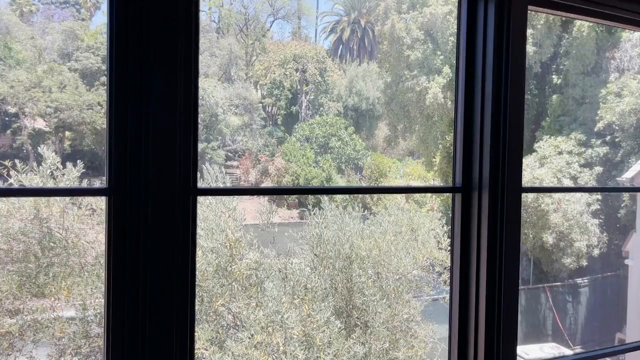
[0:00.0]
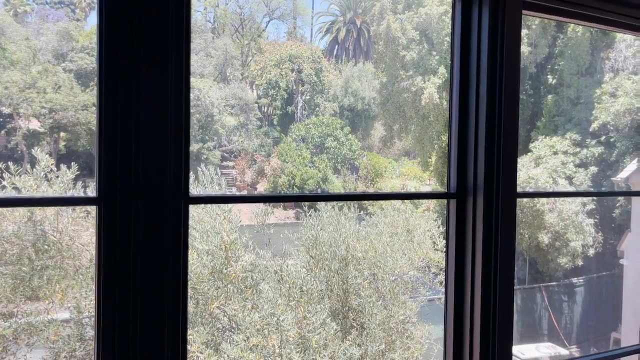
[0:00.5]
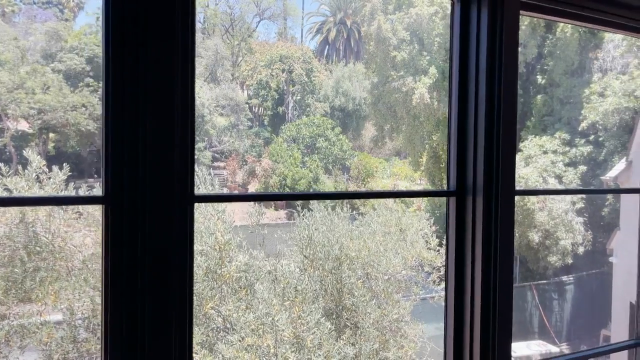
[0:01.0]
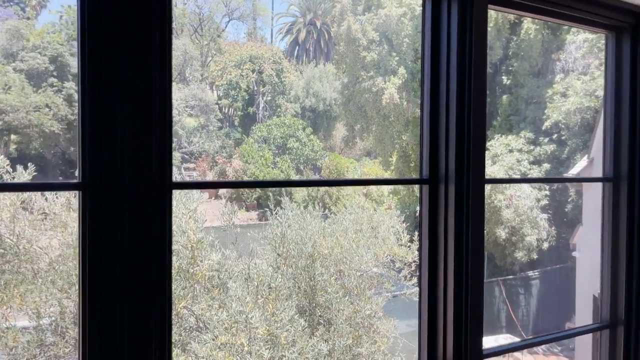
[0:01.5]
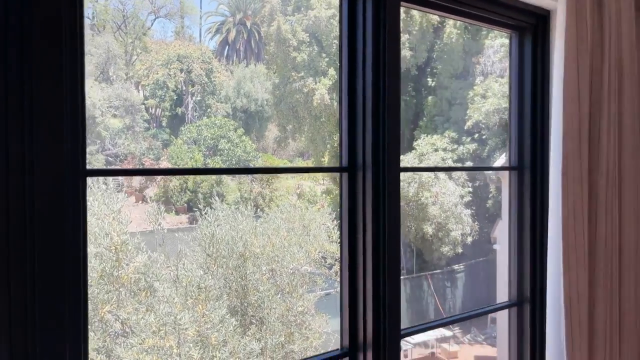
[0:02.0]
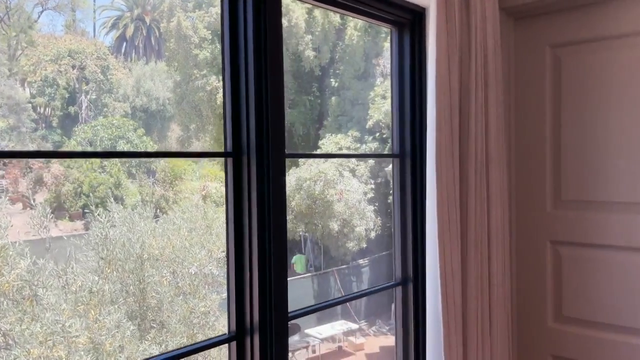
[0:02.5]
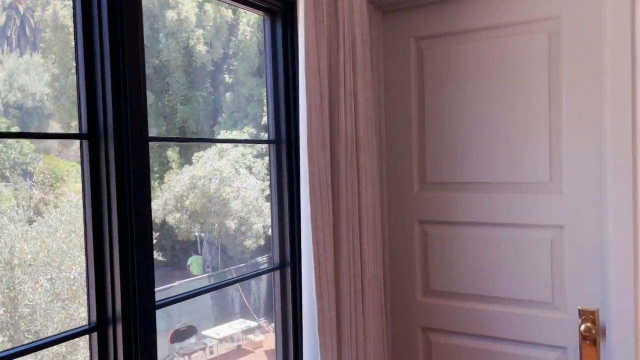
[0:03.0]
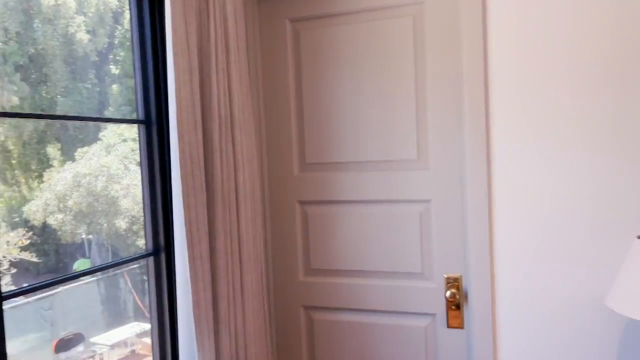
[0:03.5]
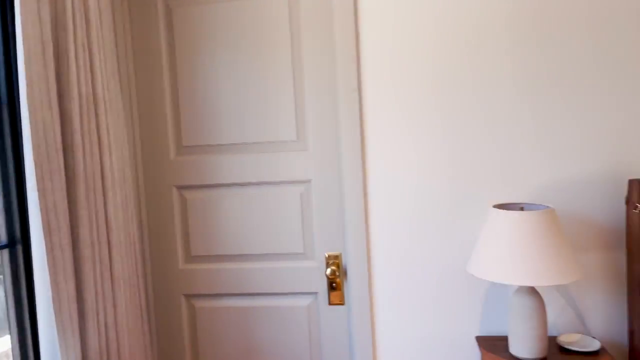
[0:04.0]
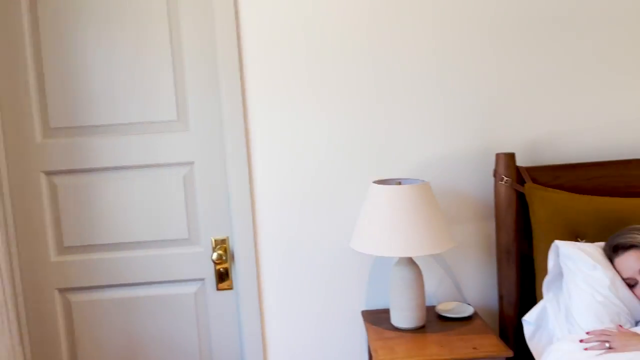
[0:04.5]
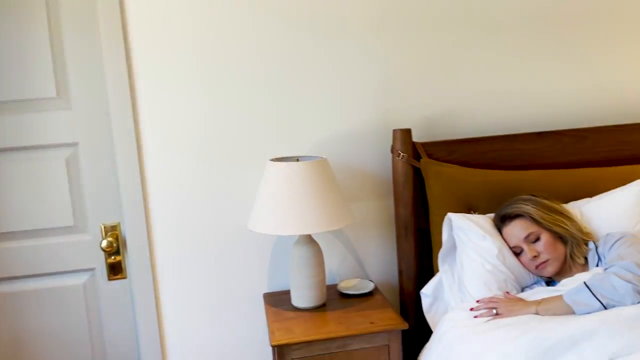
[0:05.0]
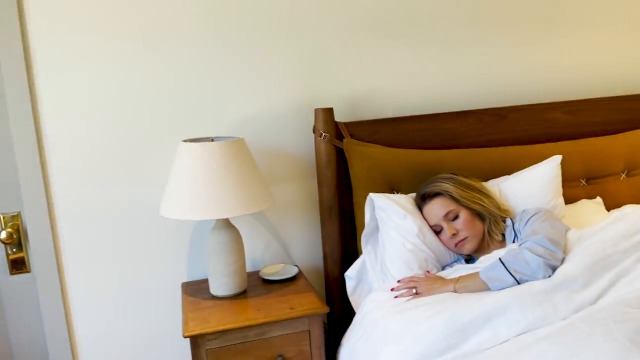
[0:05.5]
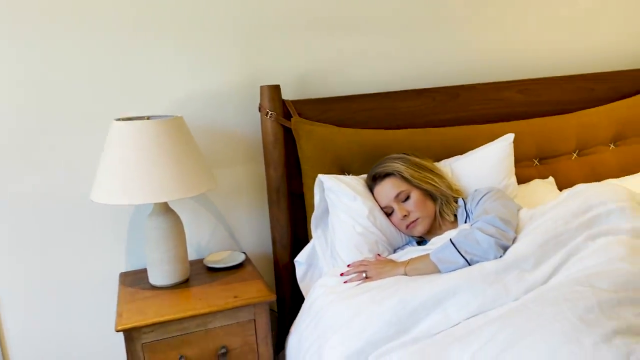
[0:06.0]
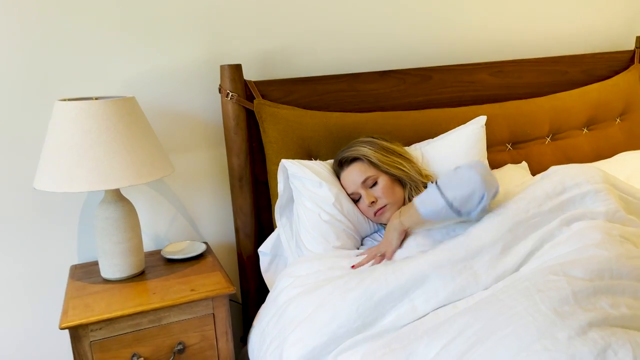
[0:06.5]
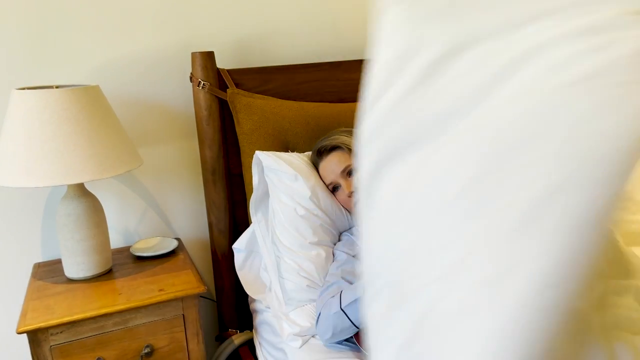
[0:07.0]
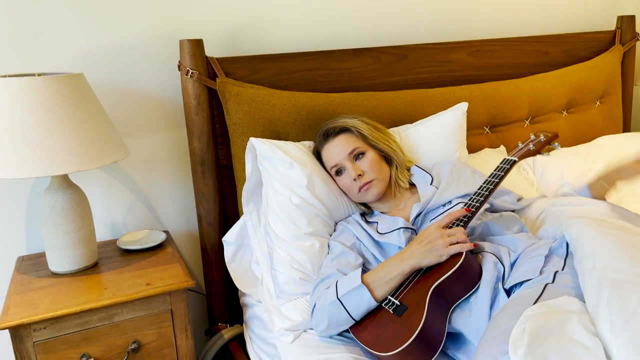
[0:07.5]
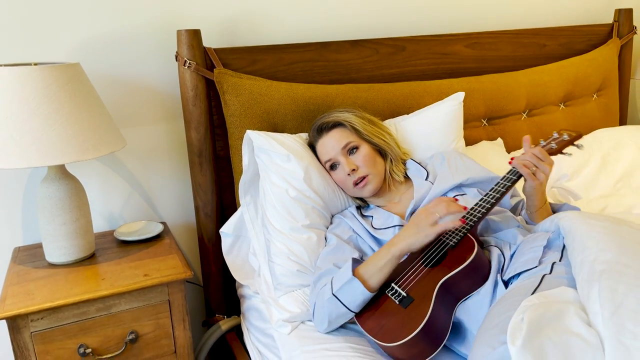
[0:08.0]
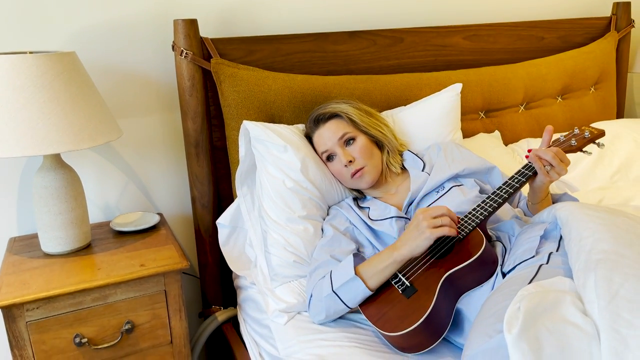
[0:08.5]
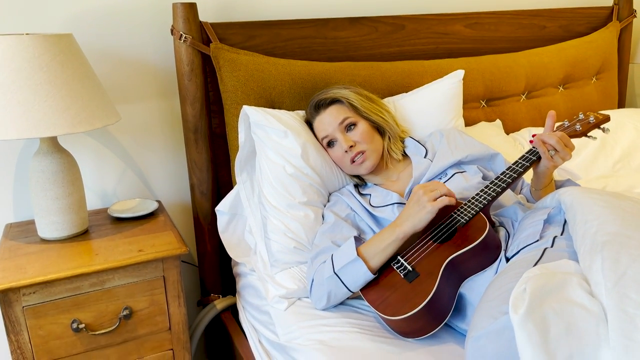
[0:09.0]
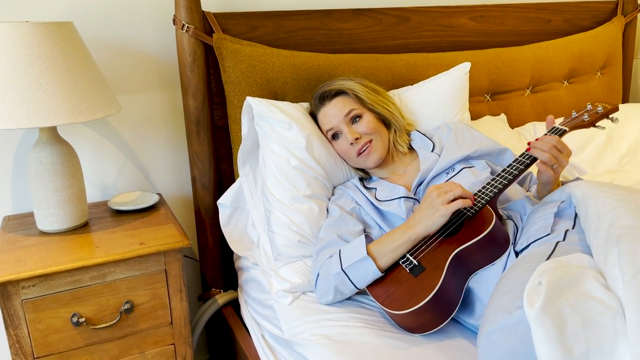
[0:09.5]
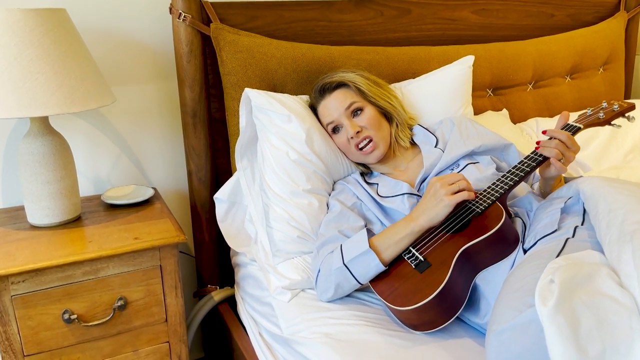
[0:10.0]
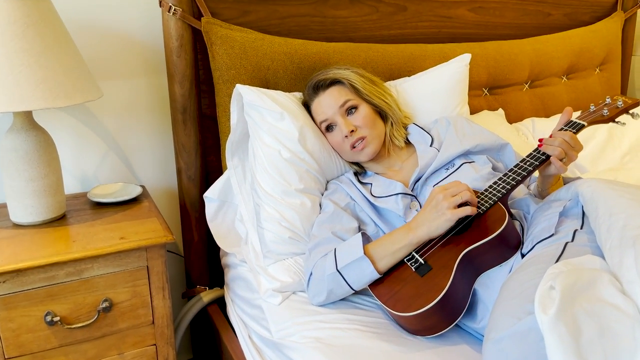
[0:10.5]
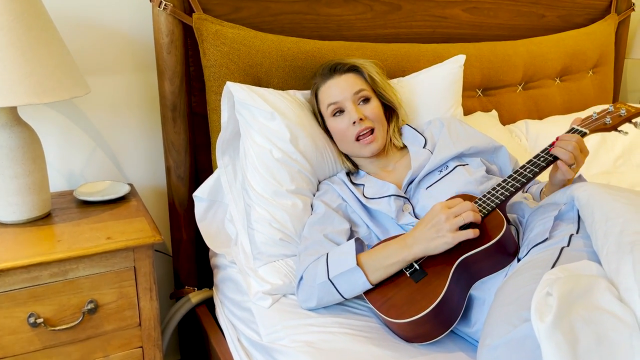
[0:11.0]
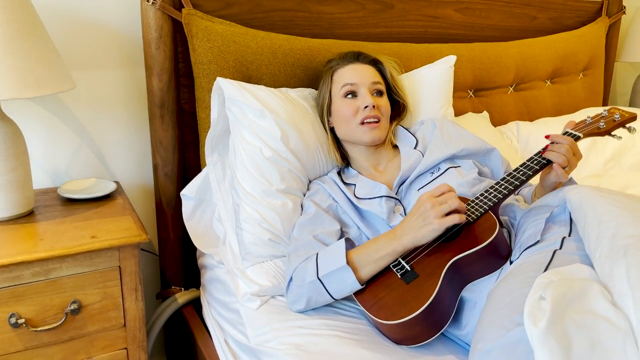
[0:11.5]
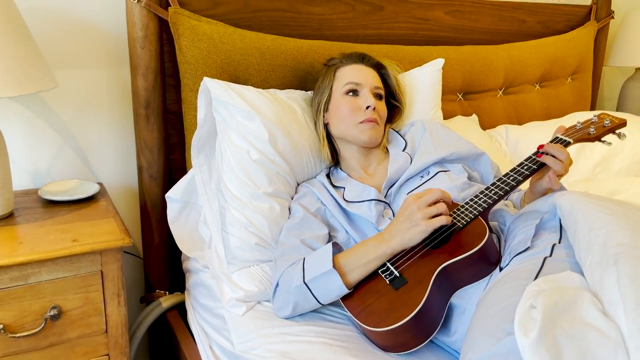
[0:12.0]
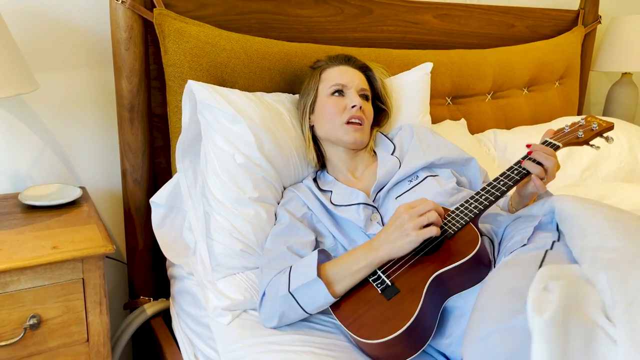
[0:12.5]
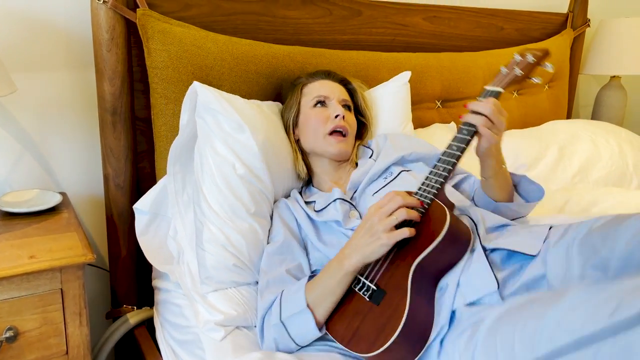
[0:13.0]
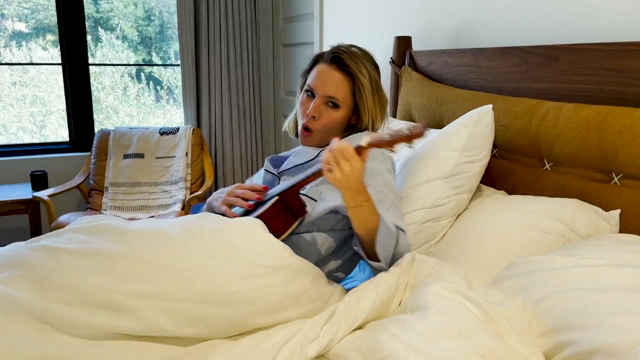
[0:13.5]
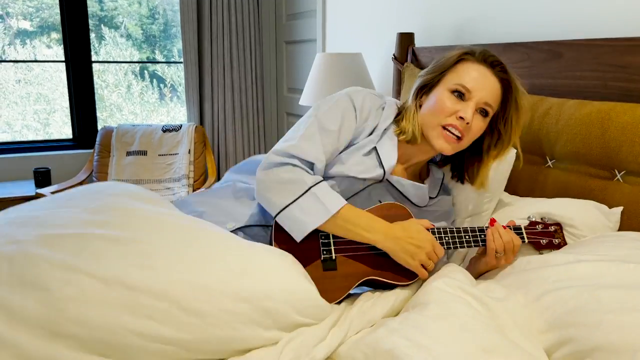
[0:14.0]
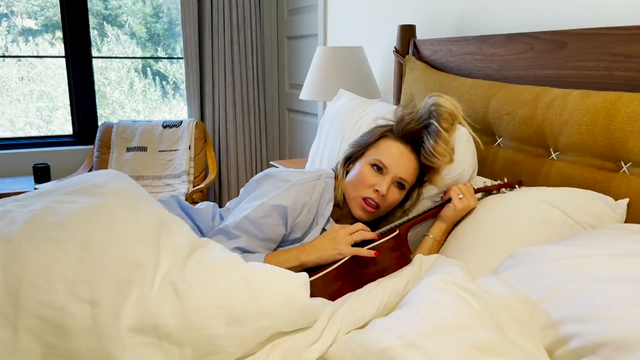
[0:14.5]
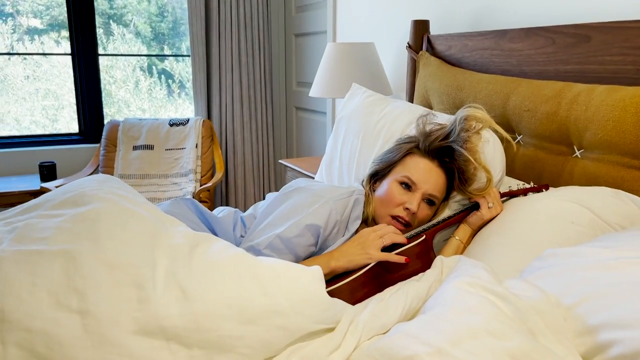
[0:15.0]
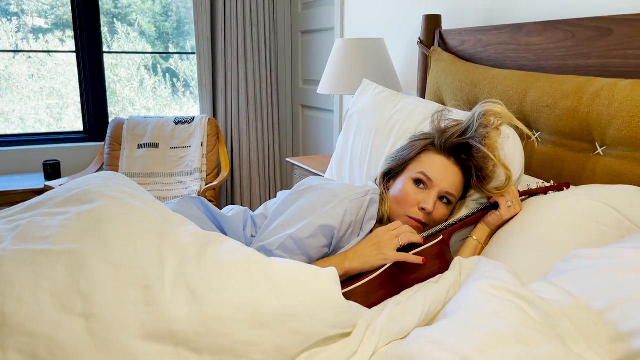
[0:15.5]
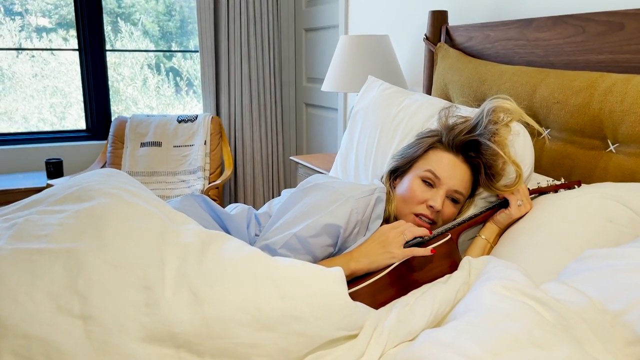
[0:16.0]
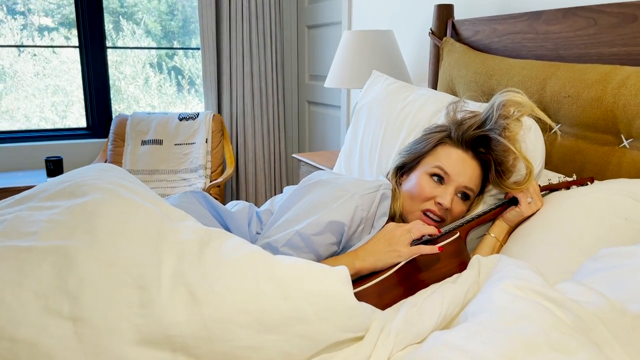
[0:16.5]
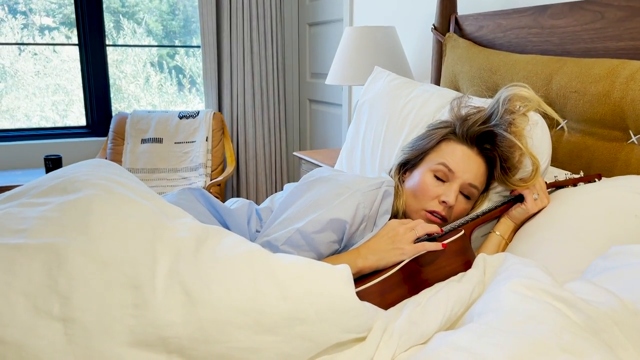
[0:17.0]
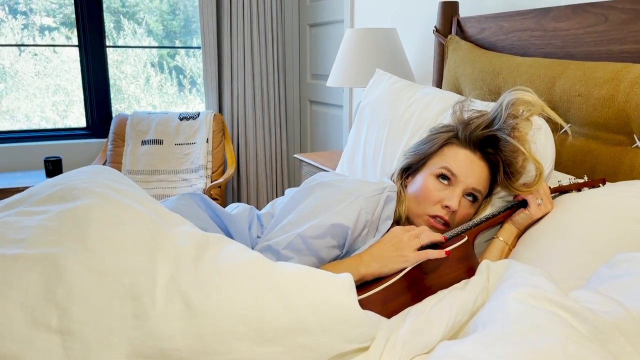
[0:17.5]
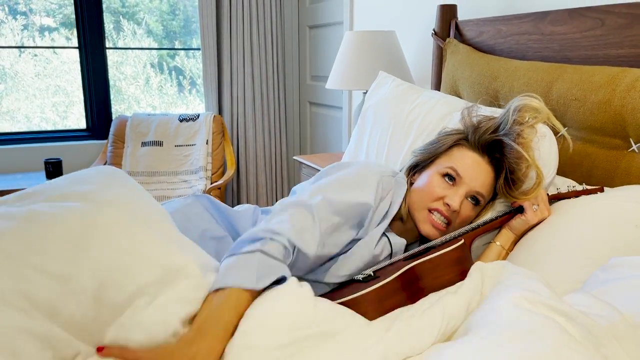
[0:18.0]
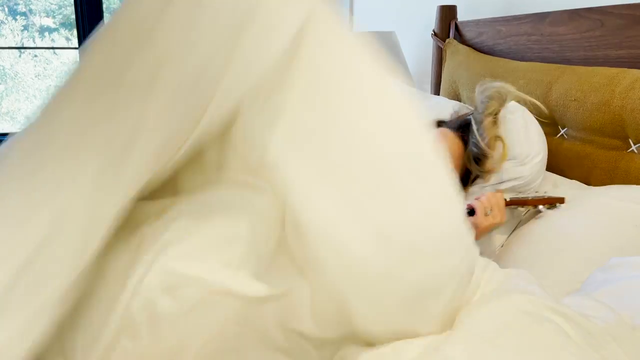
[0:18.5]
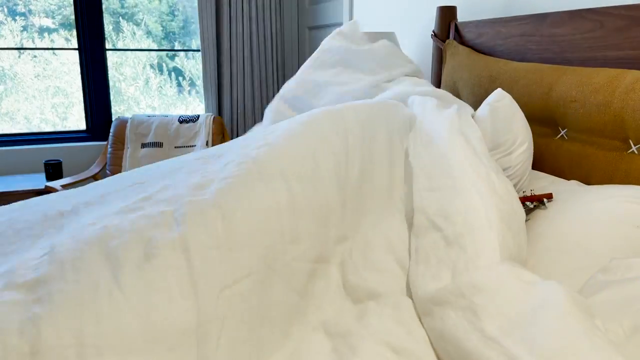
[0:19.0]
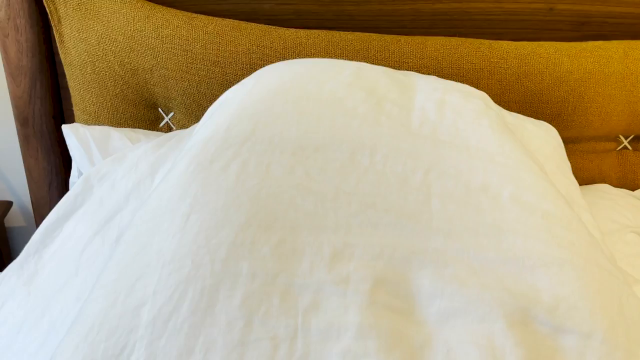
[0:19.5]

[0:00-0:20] The video opens with a view through a window, as if from inside a bedroom, then pans right to a bed against the wall. A woman with blonde hair, wearing light blue pajamas, pulls the covers off herself; she is holding a small guitar and begins to play and sing. She rolls onto her left side, still singing and playing, and looks like she is starting to get a little angry, then flips back onto her back and covers herself with the covers. The sun is shining into the room and it is daytime. The colors are very light pastels, like blue, almost white. There is a light gray door and a wooden nightstand next to her side of the bed with a little white lamp on it and a little white dish next to the lamp. By the window there is a little table and what looks like a wicker chair with some type of cover on the back, possibly a pillow.